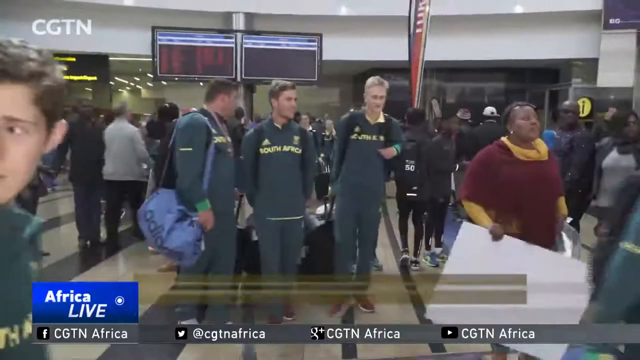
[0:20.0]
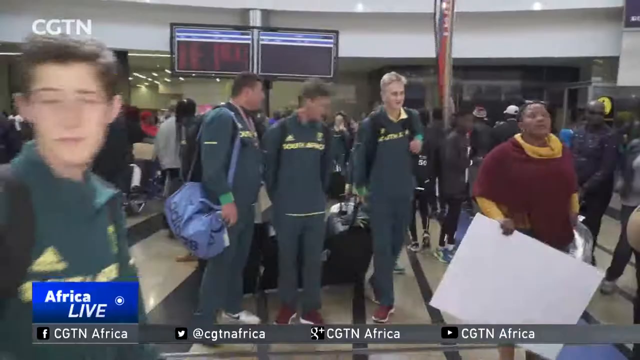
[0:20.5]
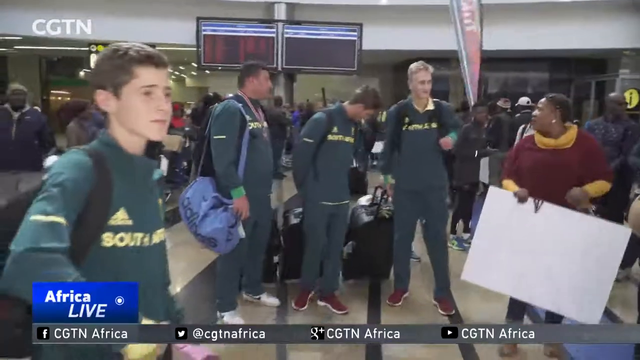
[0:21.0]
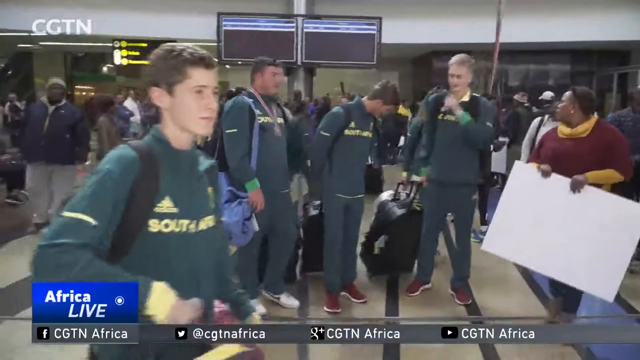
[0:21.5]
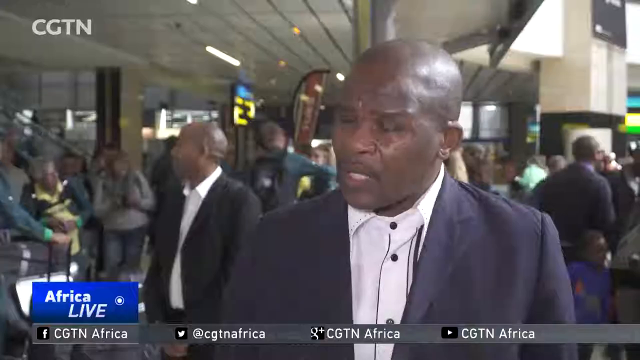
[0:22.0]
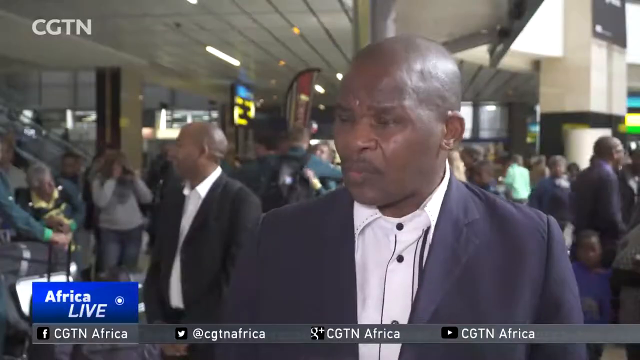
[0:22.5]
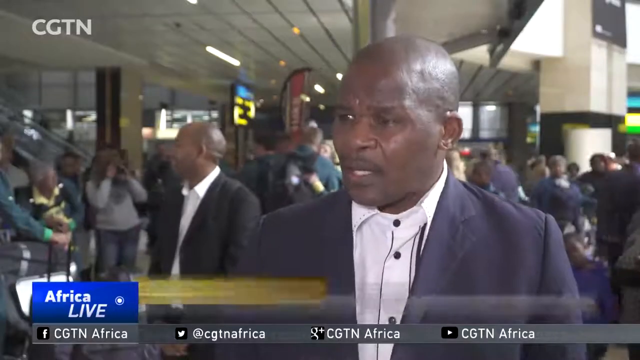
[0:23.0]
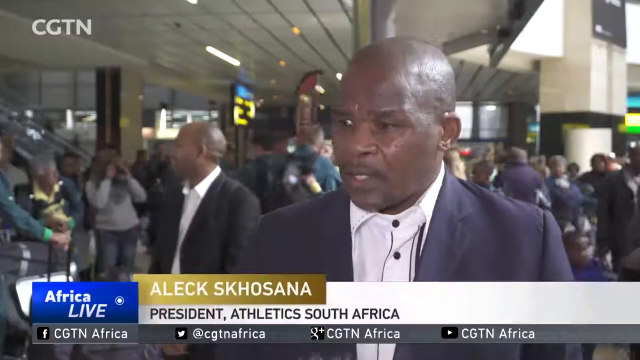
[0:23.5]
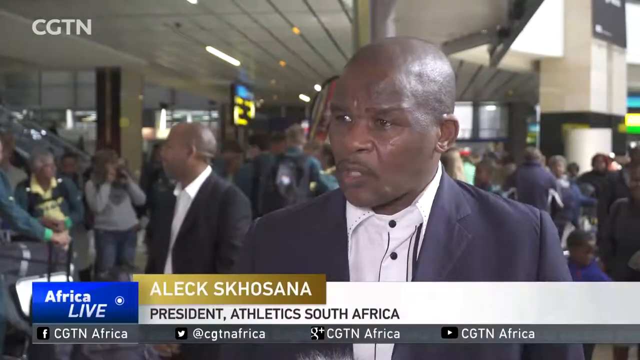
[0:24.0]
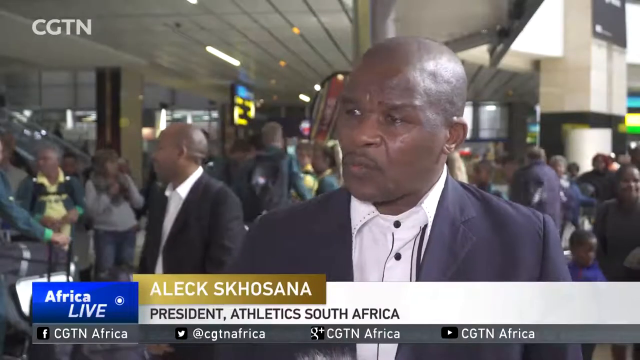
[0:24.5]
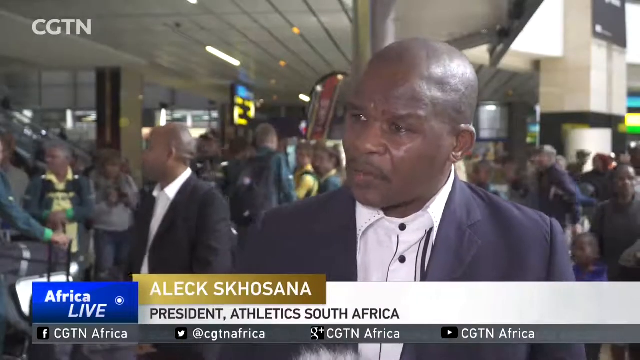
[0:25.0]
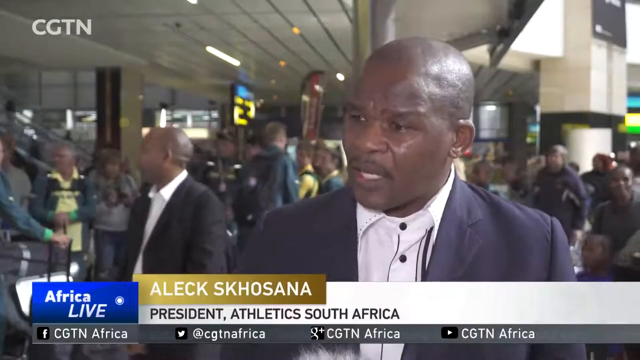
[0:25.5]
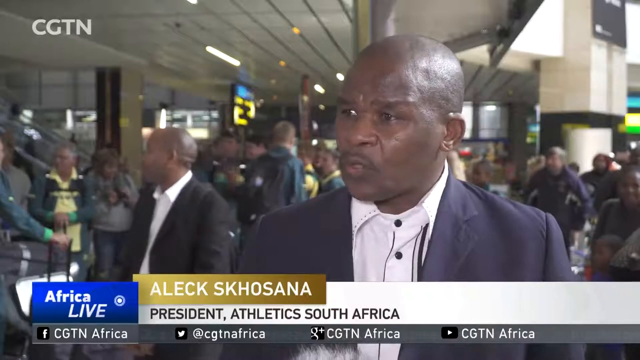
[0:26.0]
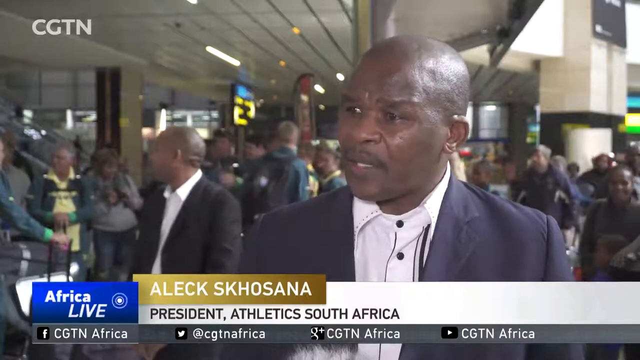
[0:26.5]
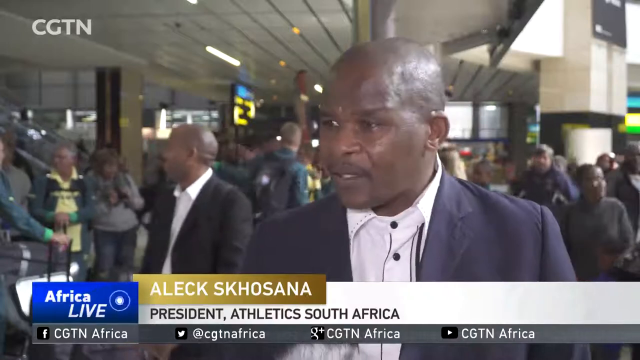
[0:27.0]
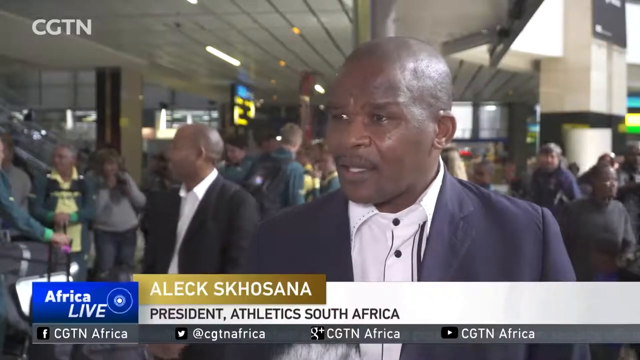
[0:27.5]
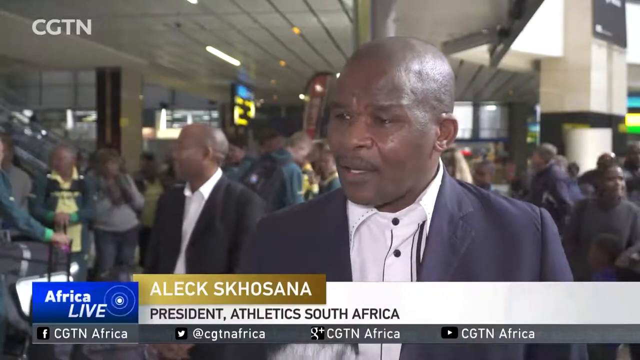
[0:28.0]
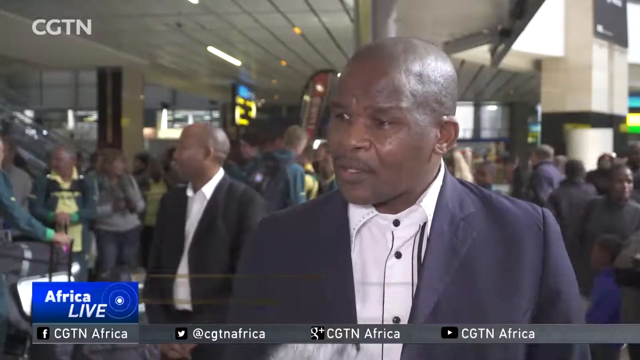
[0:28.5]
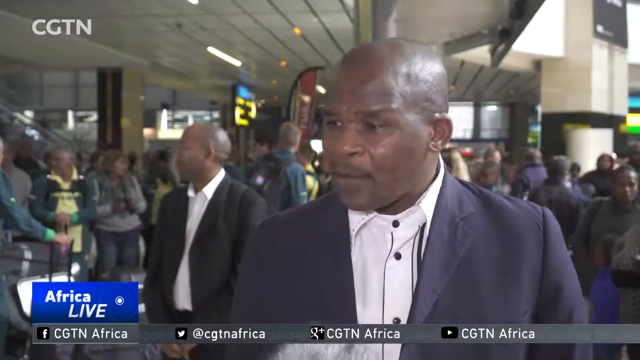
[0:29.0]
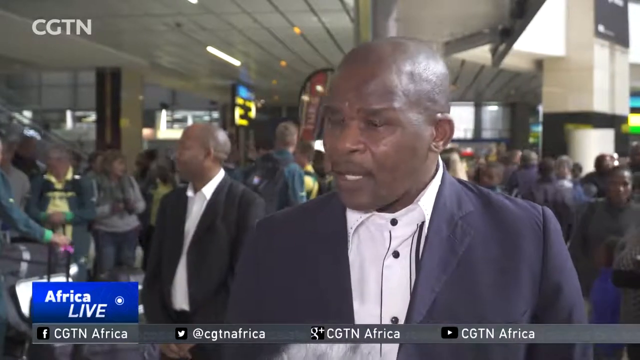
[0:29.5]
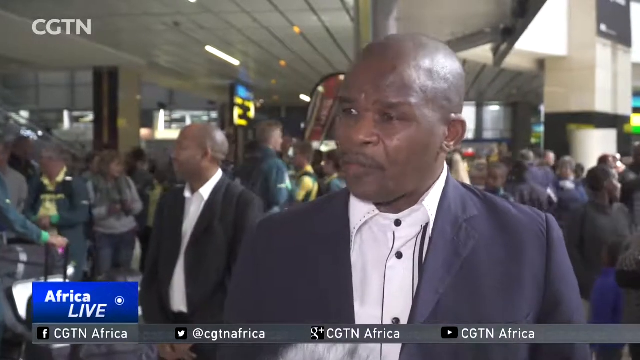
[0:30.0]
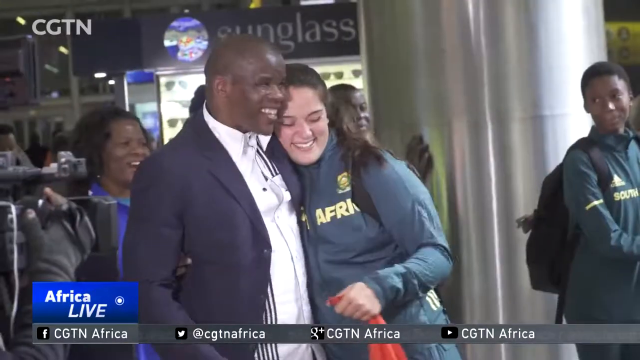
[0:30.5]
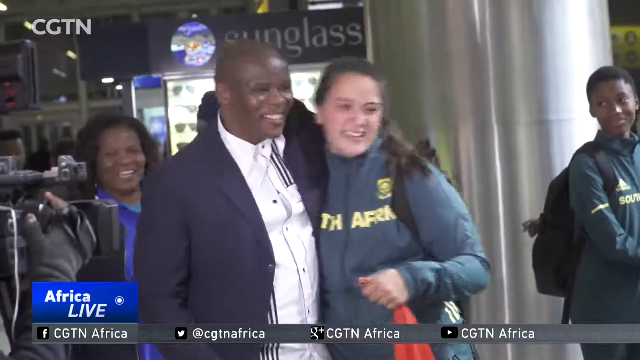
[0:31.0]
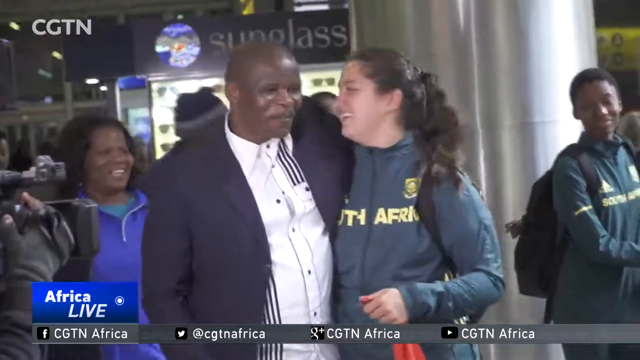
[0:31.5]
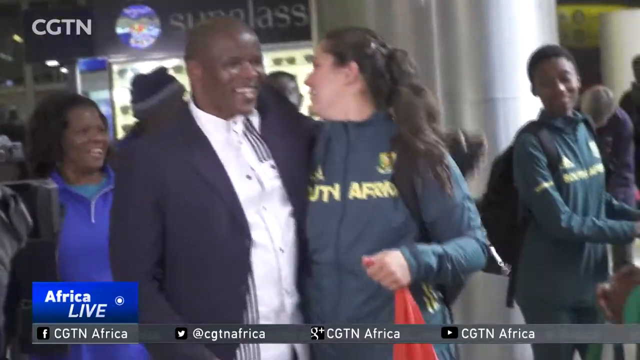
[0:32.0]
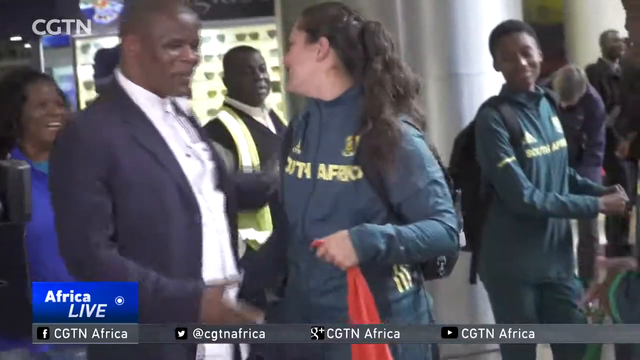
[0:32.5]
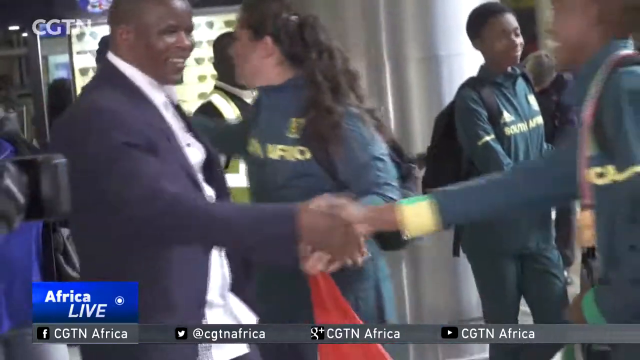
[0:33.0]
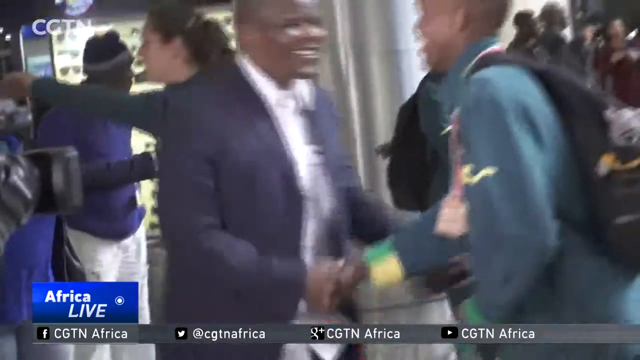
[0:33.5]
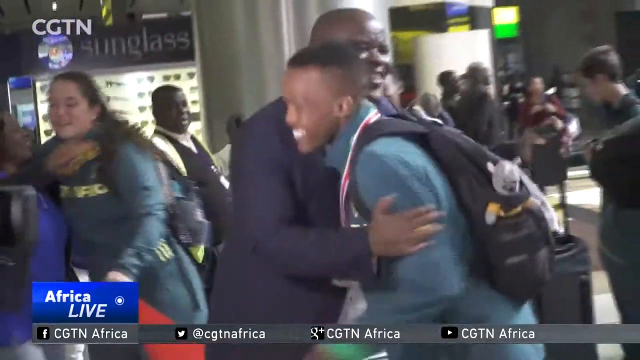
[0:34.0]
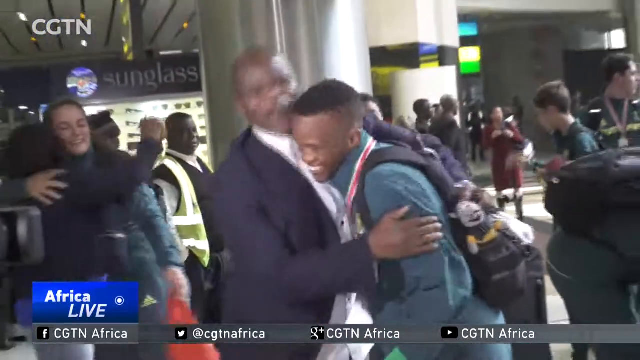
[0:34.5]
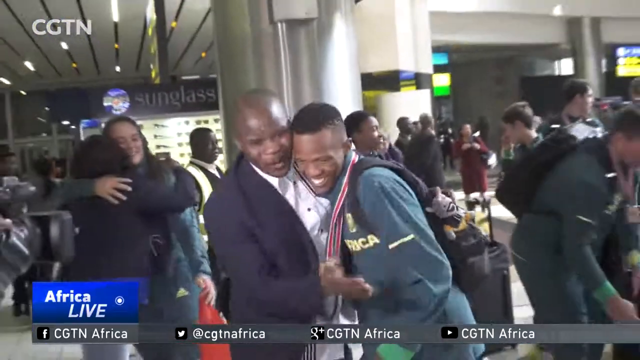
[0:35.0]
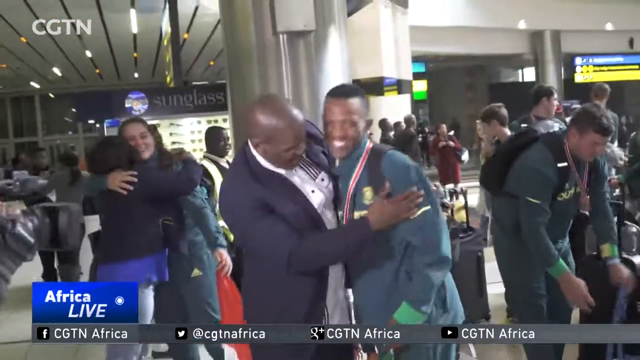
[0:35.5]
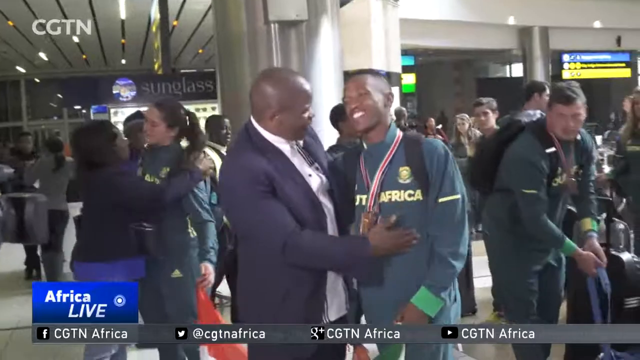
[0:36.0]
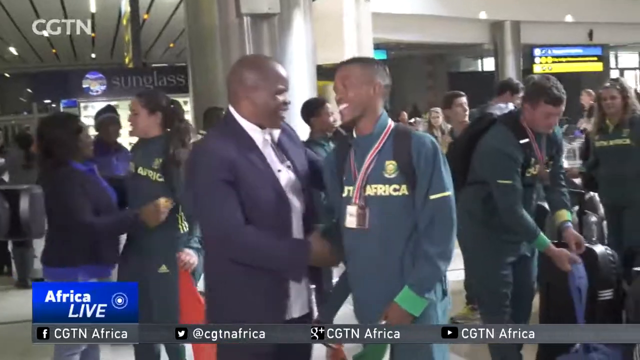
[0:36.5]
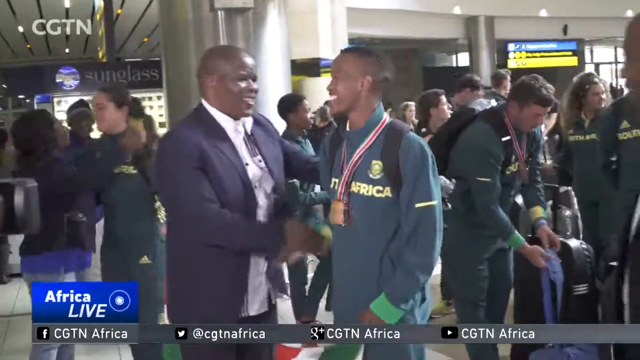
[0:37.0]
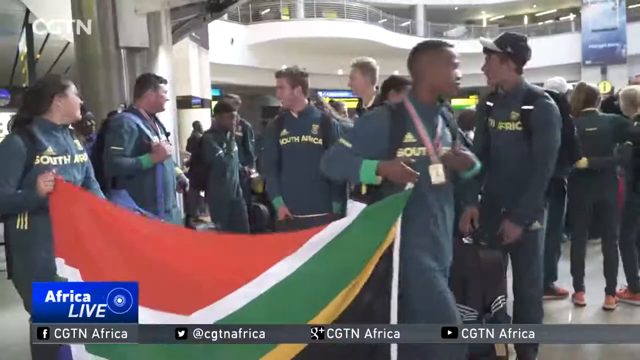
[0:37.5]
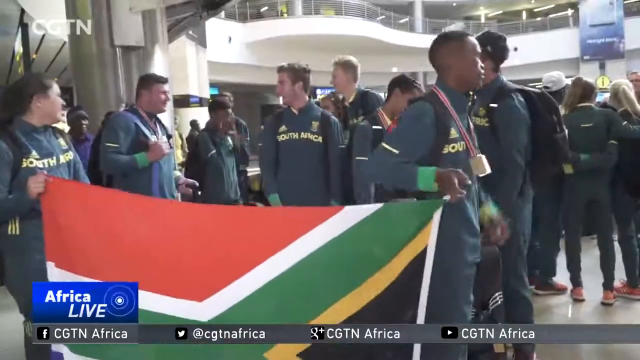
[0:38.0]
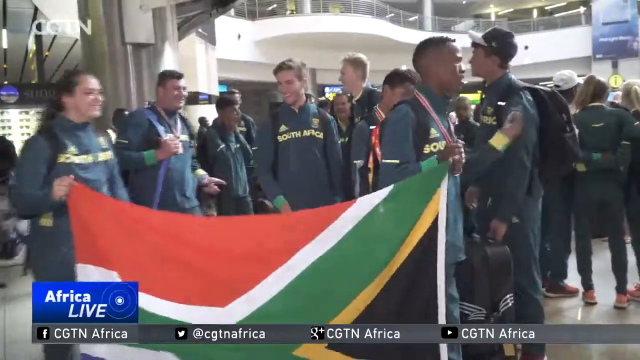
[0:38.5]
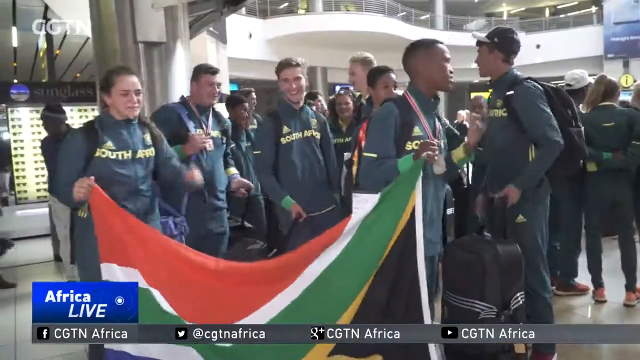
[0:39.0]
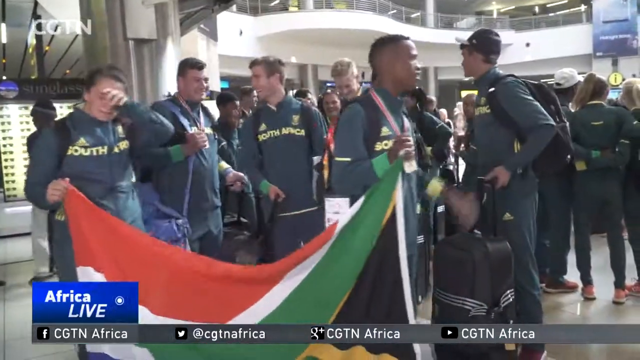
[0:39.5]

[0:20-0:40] Athletes from South Africa come through an airport, apparently bringing home medals. Three tall Caucasian athletes wear identical sweatsuits with the words "South Africa" written on the chest. A man is then interviewed as a banner scrolls up below him with his name, "Aleck Skhosana," and beneath it "President, Athletics, South Africa." He is a handsome older black man, perhaps in his 50s, with a shaved head, wearing a dark blue blazer and a white collared dress shirt with no tie. He is turned slightly to the left as he answers questions. "CGTN" appears in the upper left corner, and the lower left says "CGTN Africa" with a small Facebook logo. He is then seen hugging and gripping the hands of men as they come in off the plane, congratulating them. In the background is the rather modern interior of the airport, including a Sunglass Hut store with many sunglasses under lit shelving. "Africa Live" appears in the lower left corner.